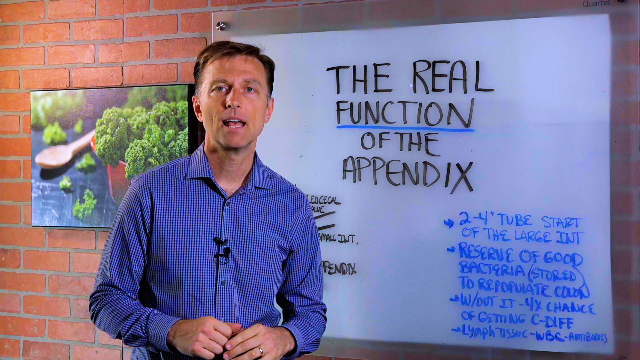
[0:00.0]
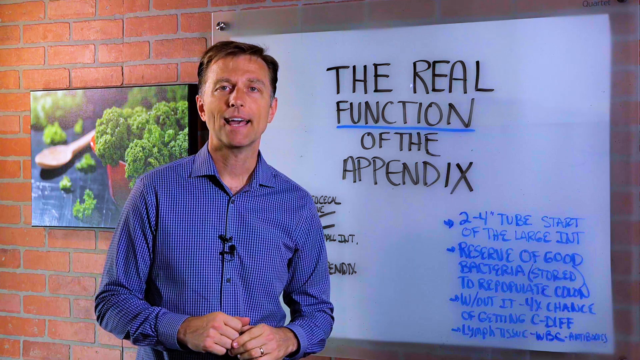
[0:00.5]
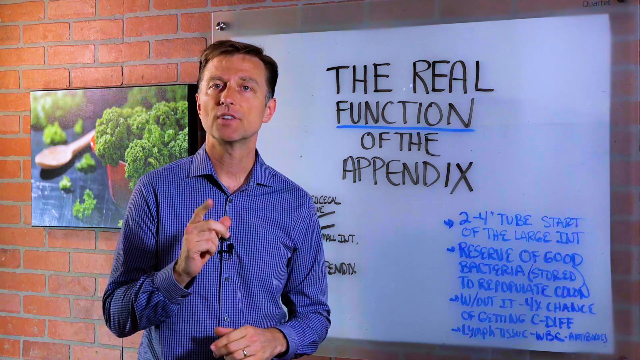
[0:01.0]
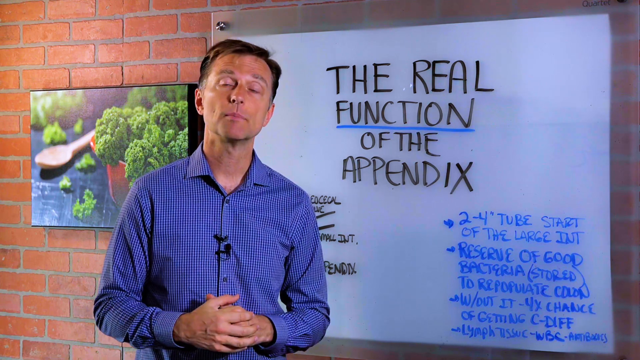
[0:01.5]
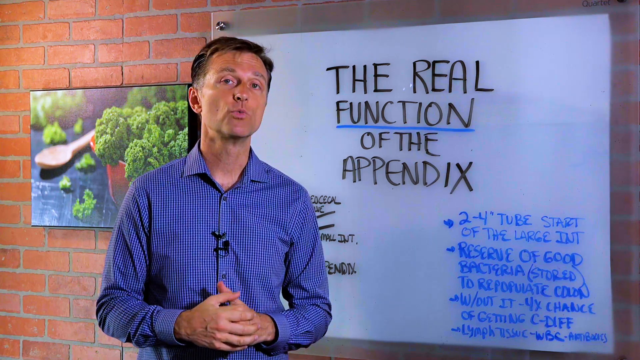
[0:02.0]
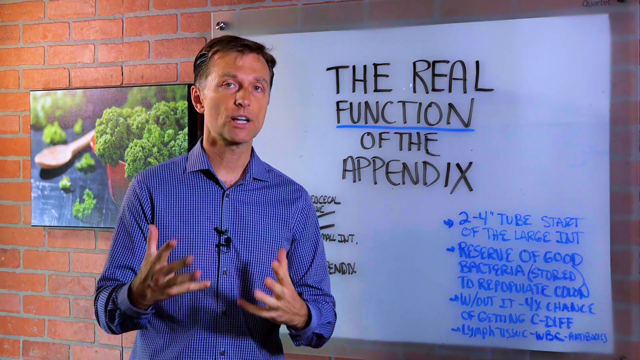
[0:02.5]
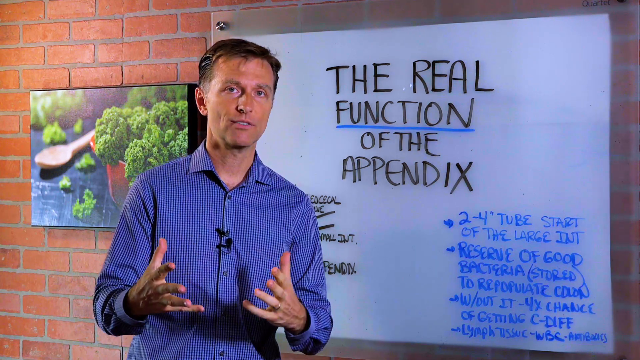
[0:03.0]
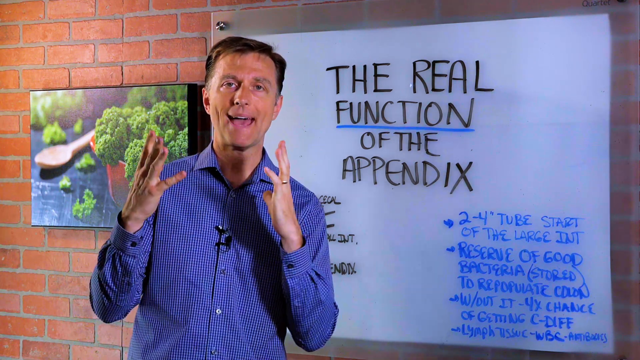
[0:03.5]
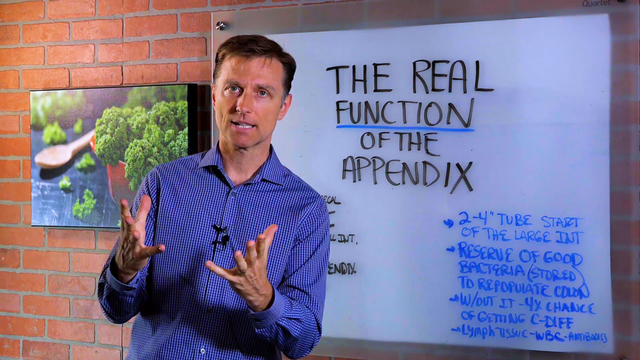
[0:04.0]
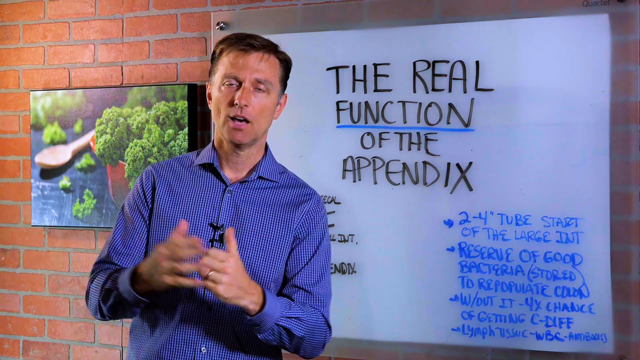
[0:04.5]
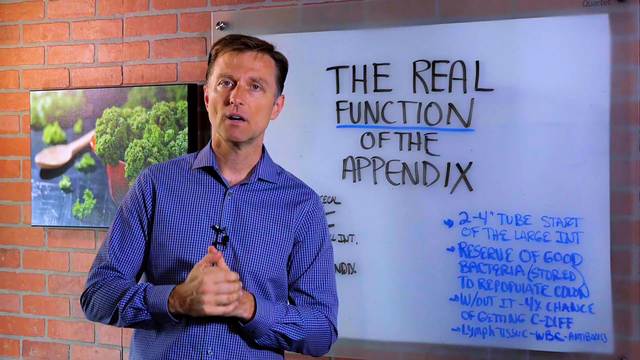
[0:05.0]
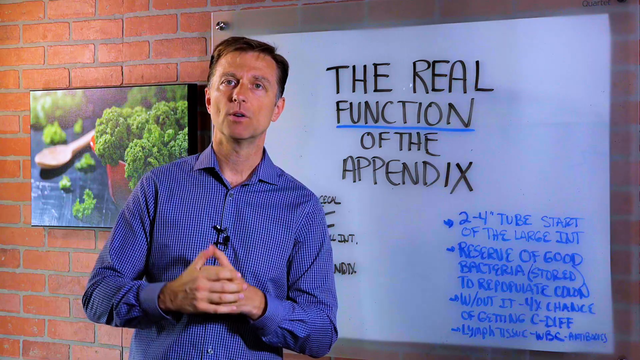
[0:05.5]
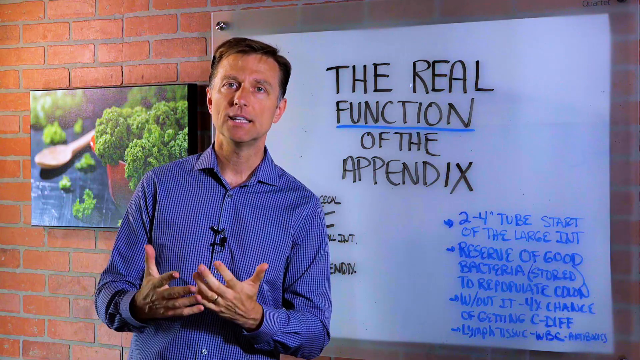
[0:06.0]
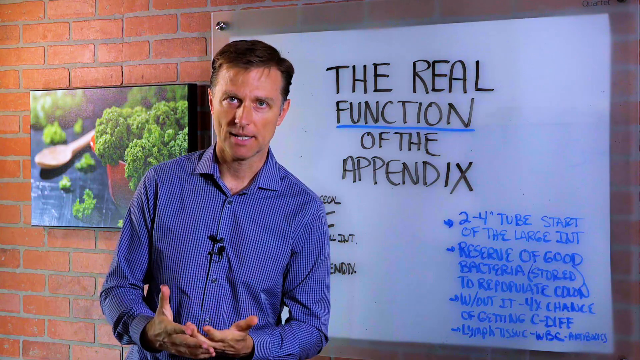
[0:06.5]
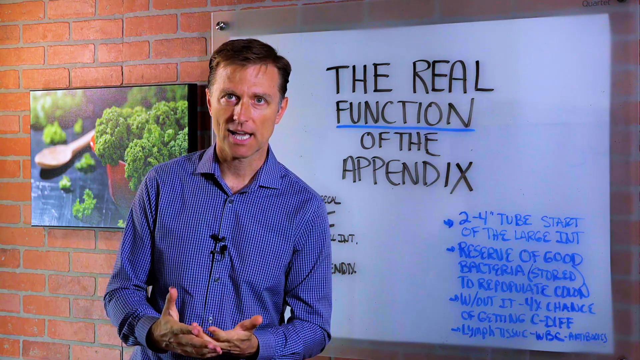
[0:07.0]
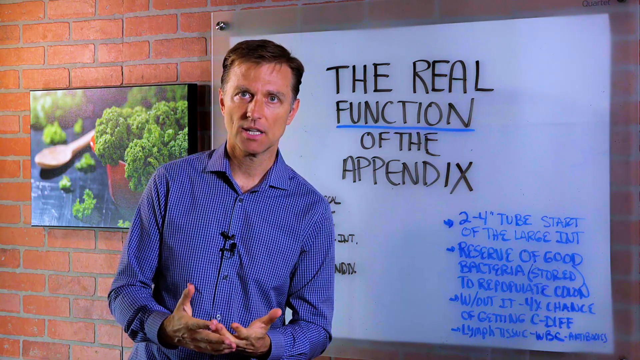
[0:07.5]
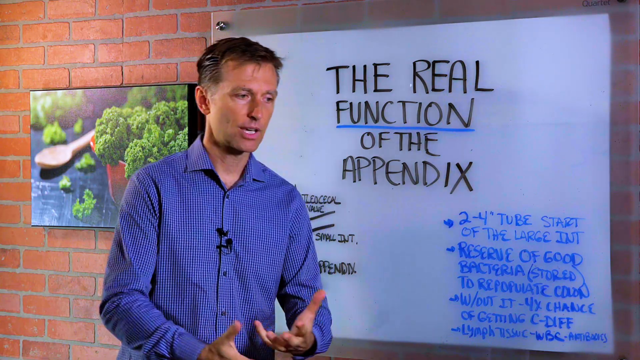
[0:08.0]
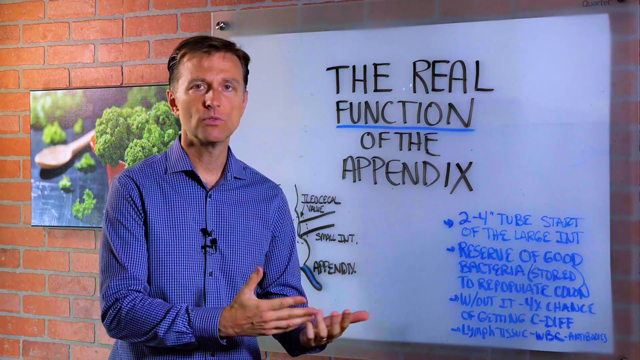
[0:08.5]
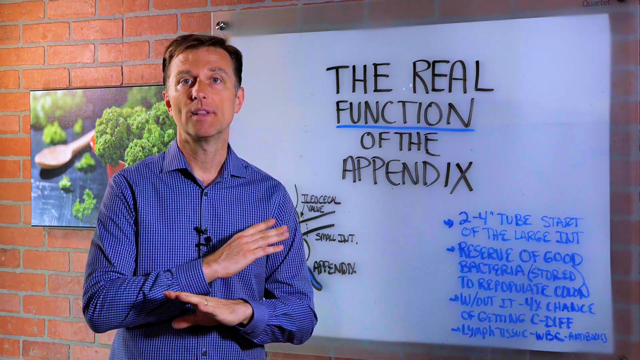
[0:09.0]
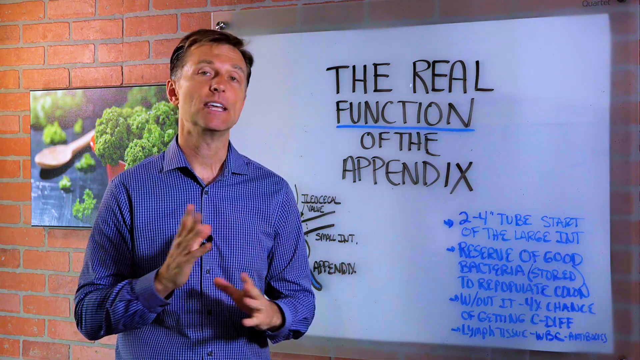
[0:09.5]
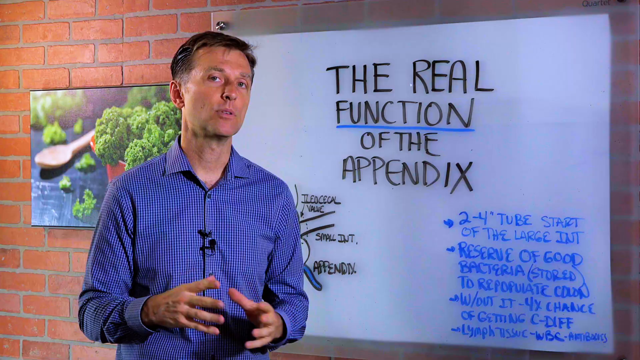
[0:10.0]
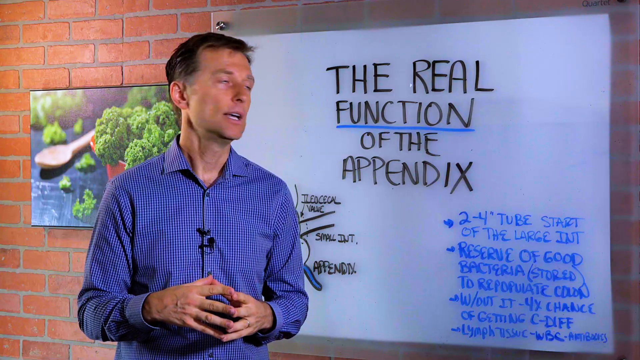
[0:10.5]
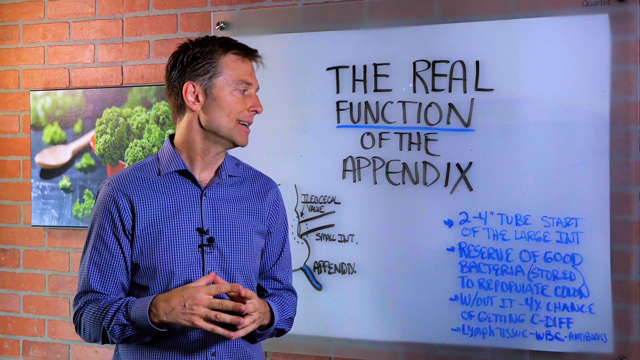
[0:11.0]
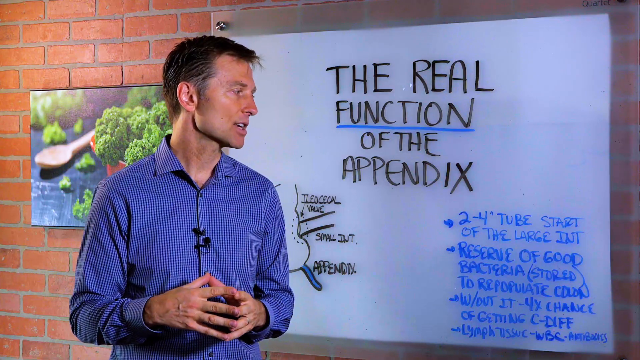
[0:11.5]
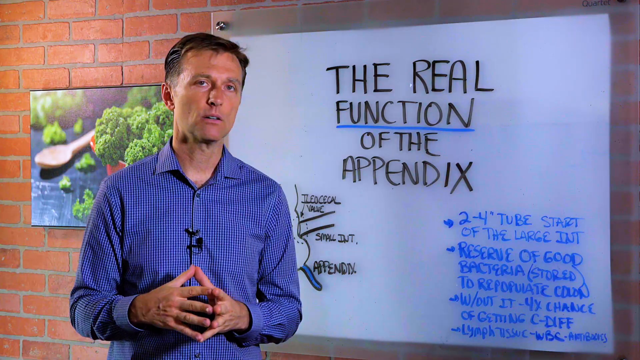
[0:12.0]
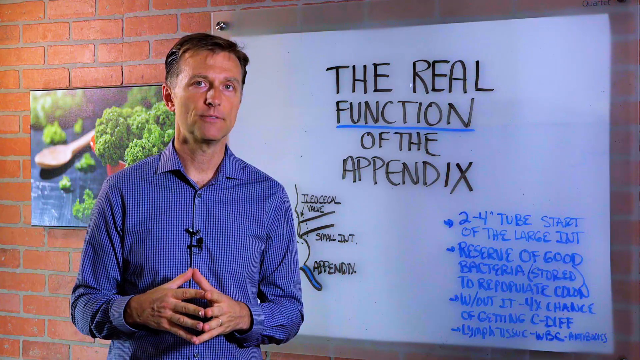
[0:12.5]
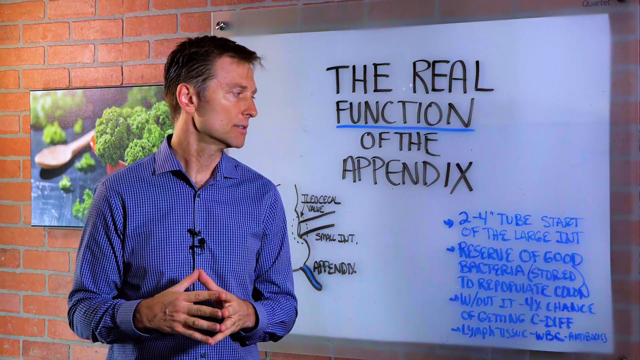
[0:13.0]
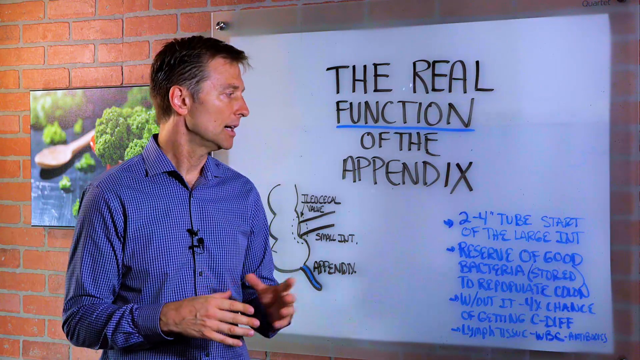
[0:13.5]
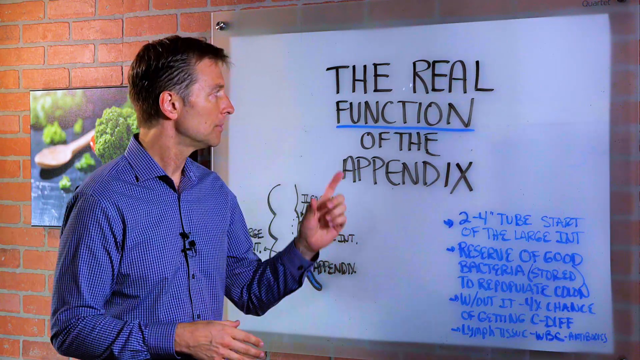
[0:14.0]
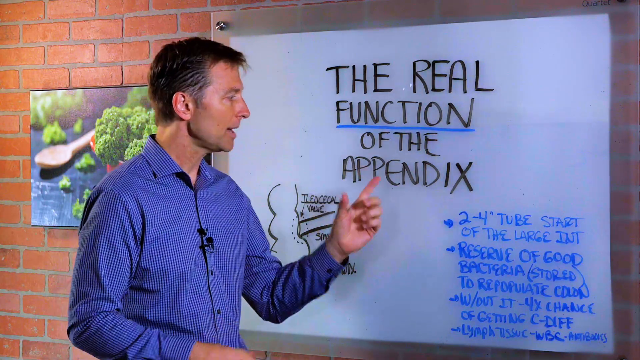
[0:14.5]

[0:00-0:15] A man, standing in front of a brick wall, talks while gesturing passionately with his hands; the video looks like it is going to be about the functions of the appendix. He waves both hands toward the viewer. Also visible are a kale salad bowl, a red bowl and a wooden spoon. The text "the real function of the appendix" appears in bold capital letters.